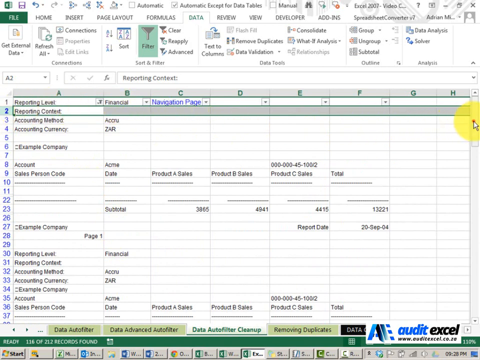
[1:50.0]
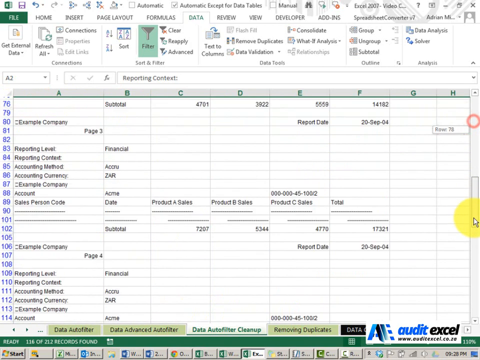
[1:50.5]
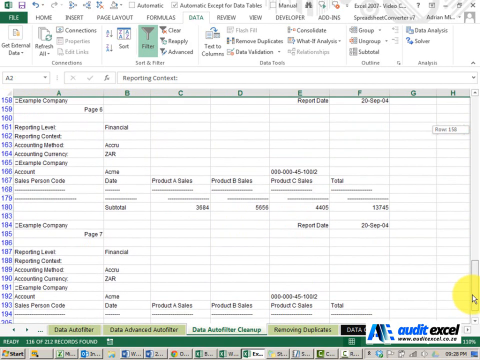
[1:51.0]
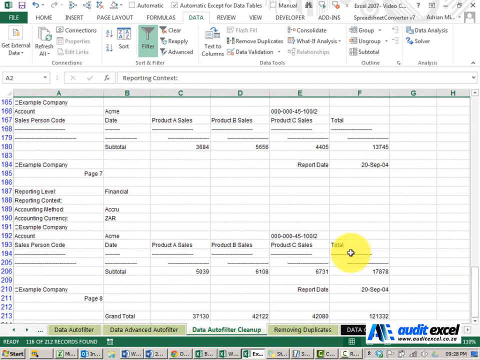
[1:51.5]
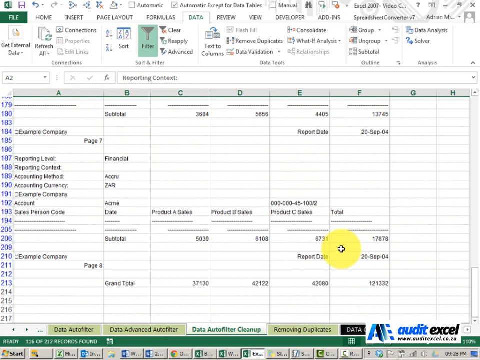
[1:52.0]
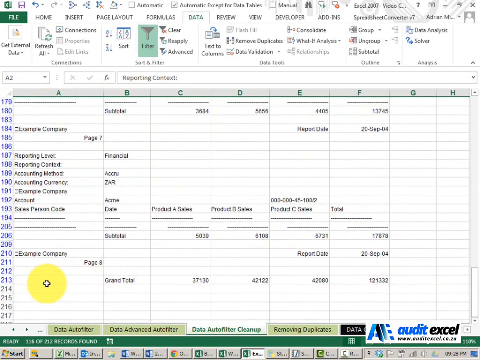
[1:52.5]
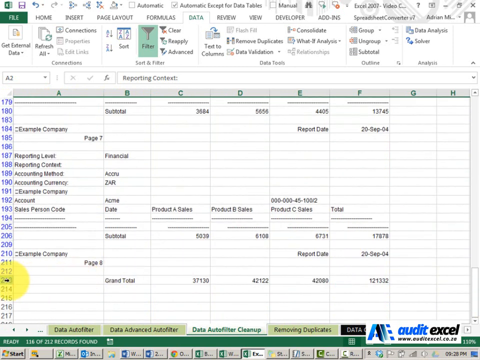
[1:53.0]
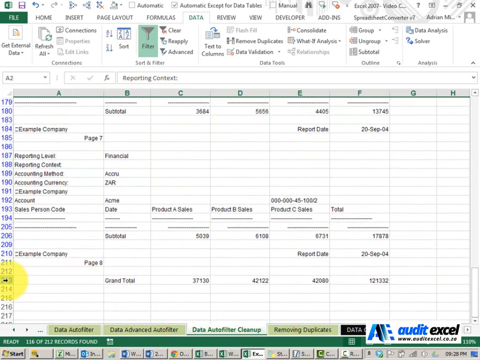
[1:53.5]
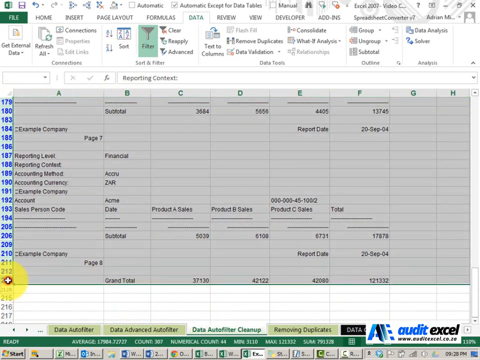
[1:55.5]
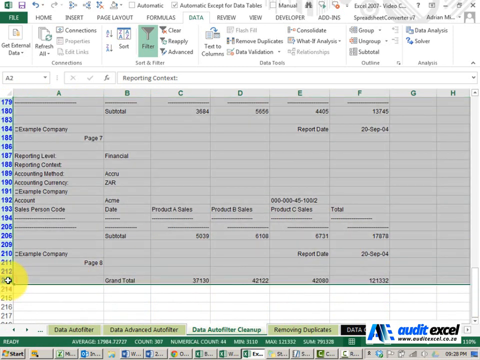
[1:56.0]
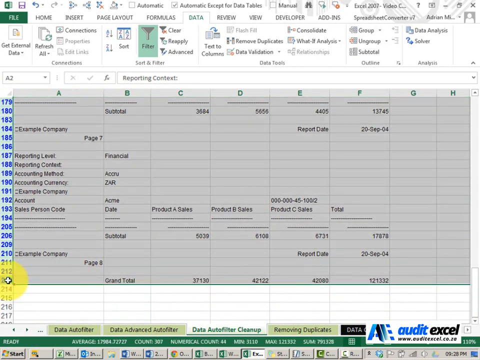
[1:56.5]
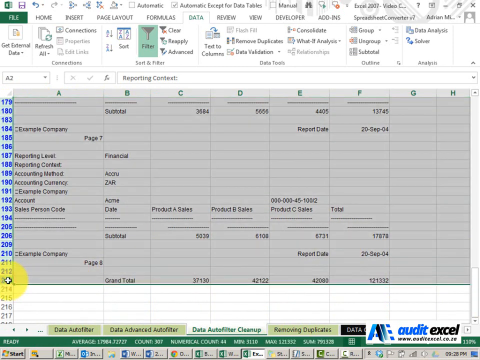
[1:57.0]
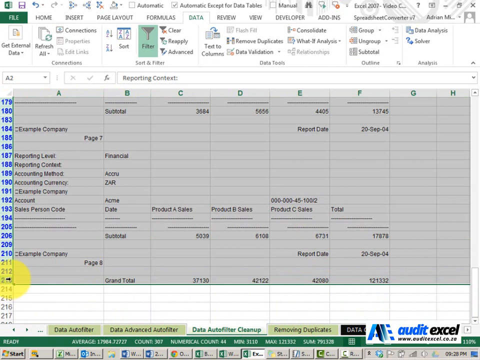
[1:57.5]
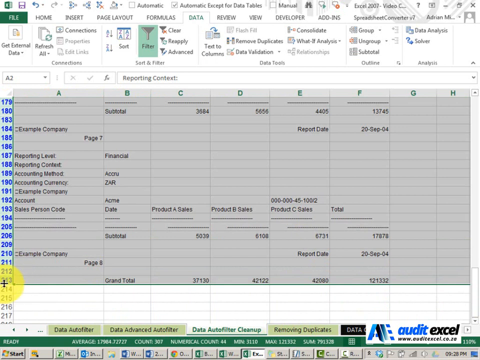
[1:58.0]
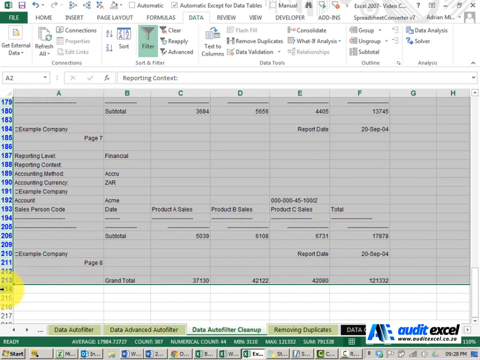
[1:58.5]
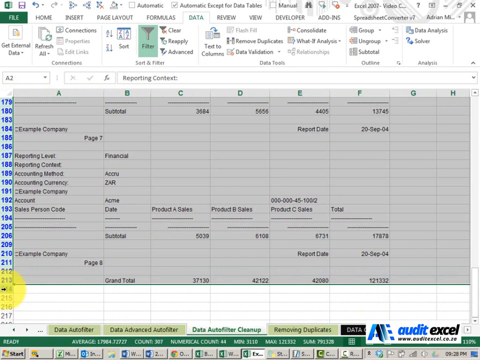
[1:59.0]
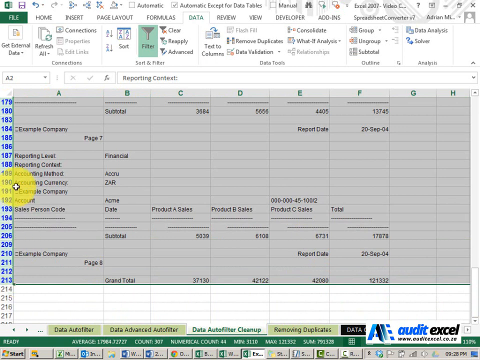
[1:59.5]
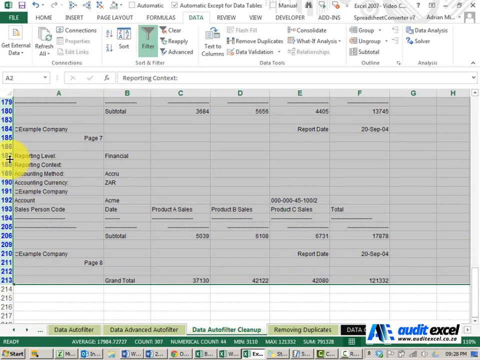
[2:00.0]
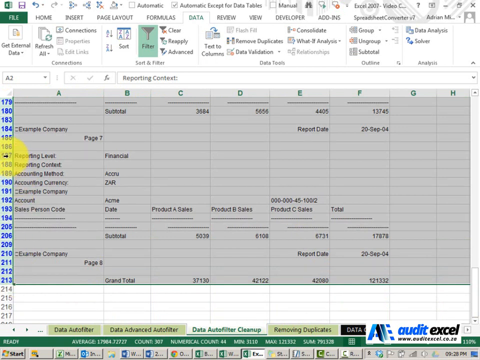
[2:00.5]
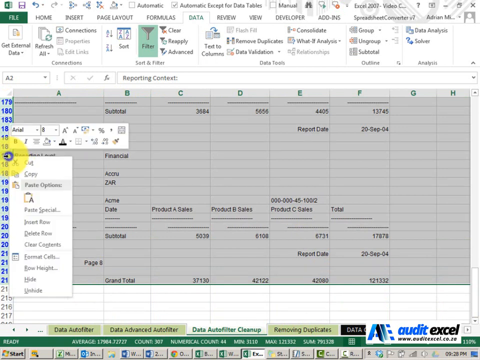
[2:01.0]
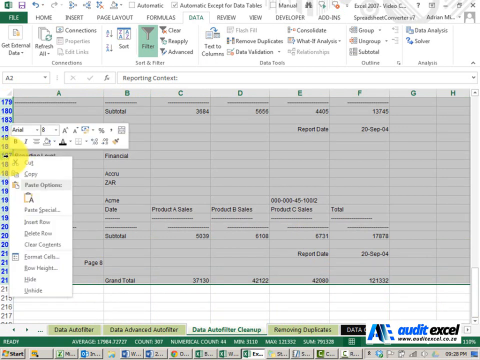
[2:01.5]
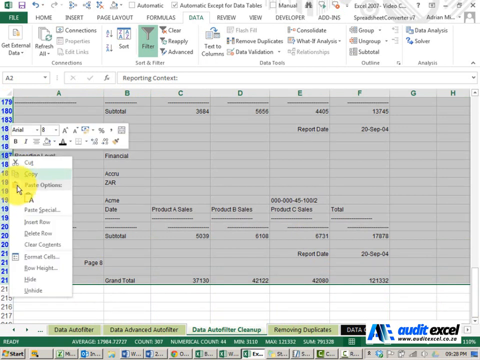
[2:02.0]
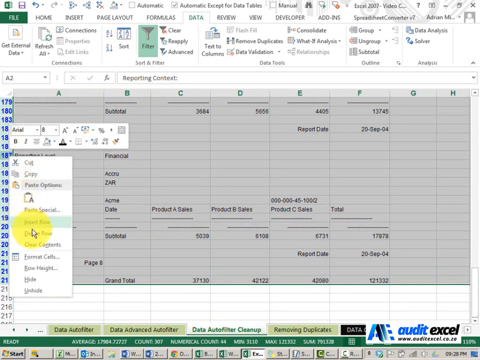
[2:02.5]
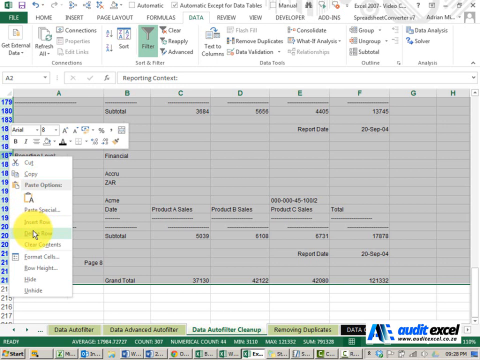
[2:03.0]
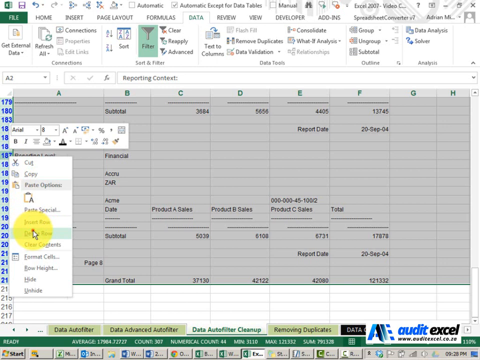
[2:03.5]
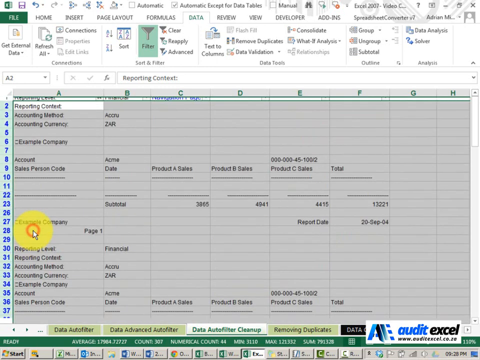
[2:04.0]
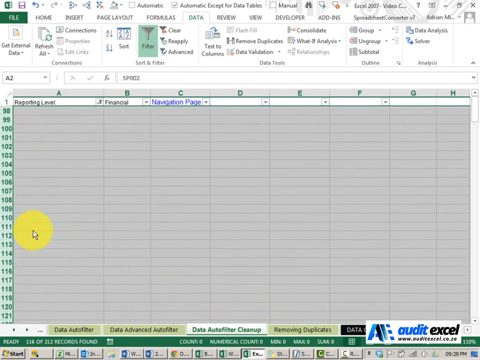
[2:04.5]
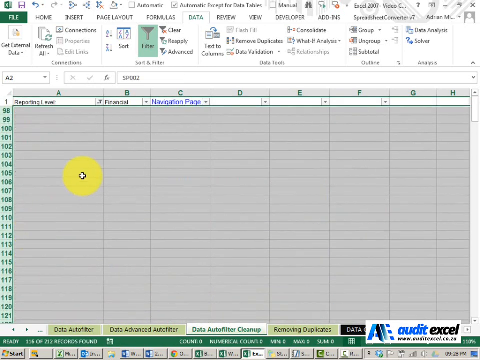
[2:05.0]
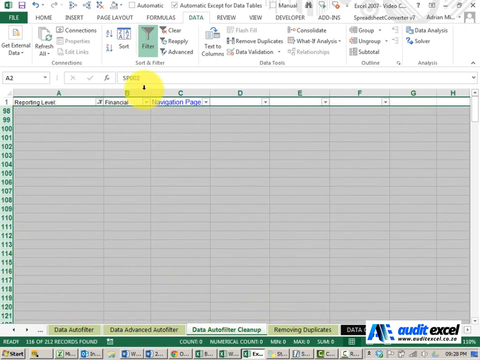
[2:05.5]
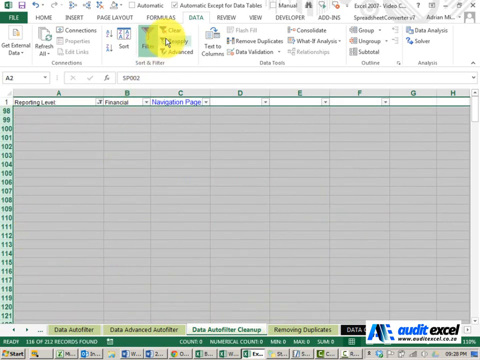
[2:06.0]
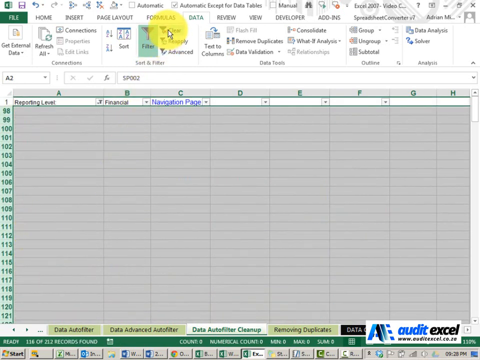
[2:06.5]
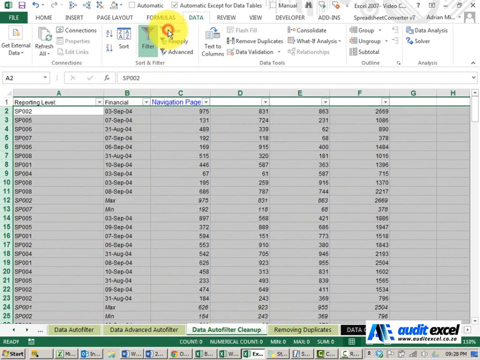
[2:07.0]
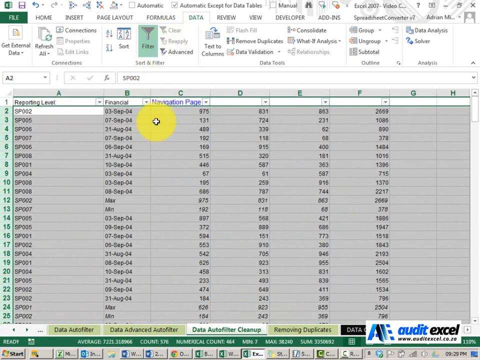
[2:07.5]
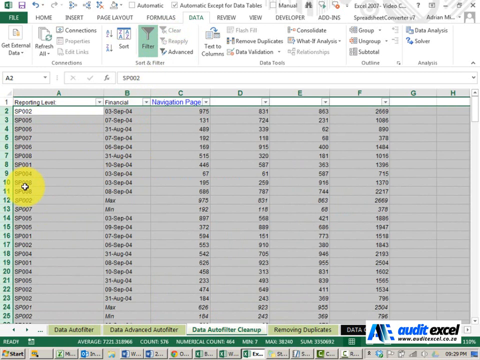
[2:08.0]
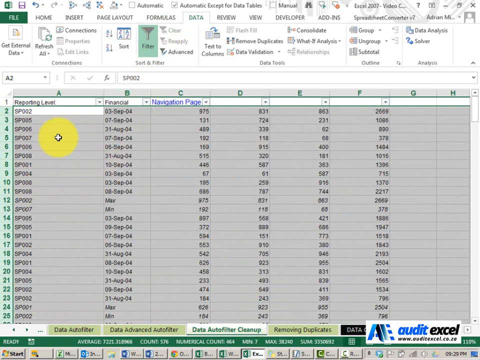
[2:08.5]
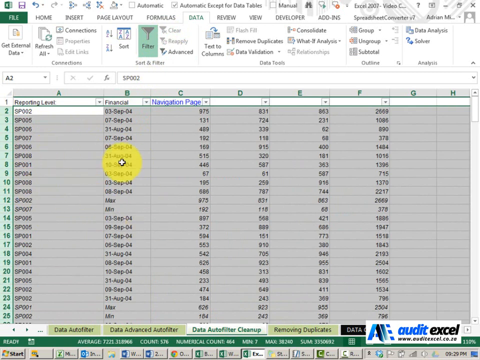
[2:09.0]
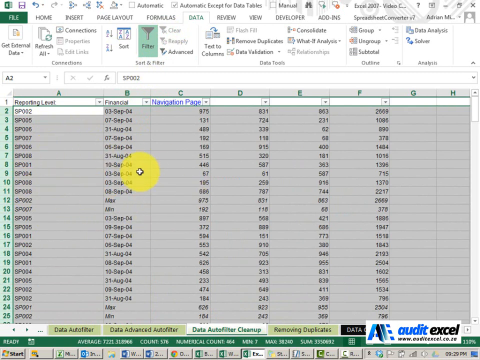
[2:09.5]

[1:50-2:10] The view is scrolled all the way to the bottom of the spreadsheet, and everything from the top down to the very last row with data is selected. The content is cut, data auto filter cleanup is used, the rows are deleted and clear is selected. After clear, the data looks different: the only thing showing is reporting levels for all of the salespeople.